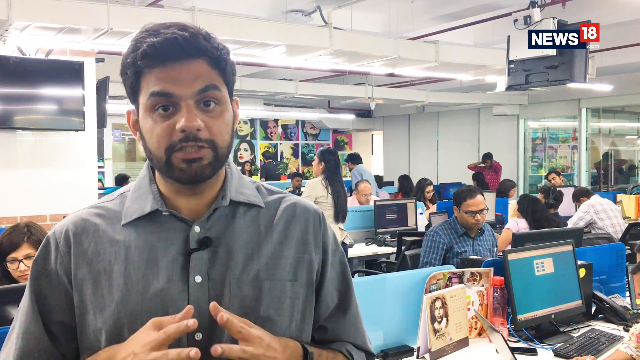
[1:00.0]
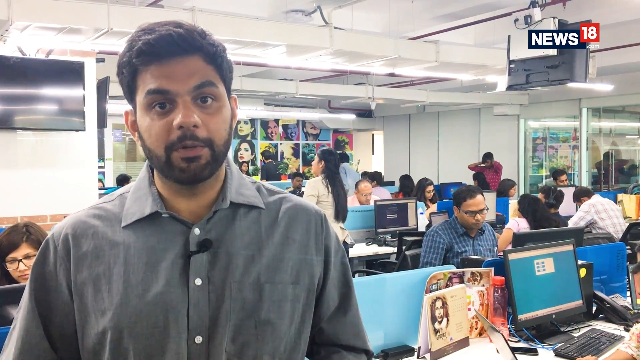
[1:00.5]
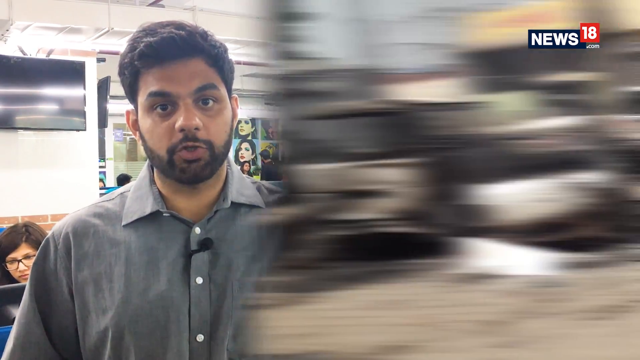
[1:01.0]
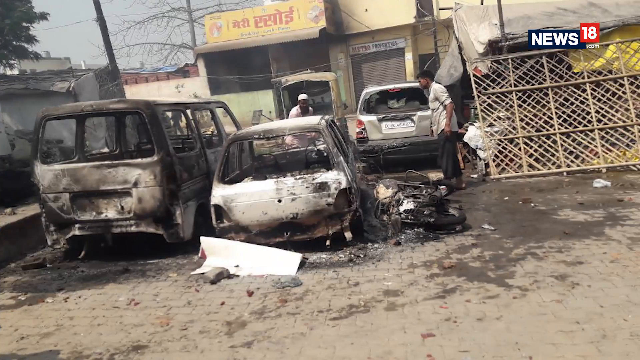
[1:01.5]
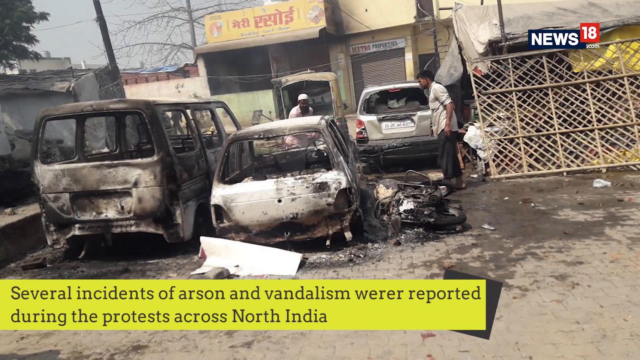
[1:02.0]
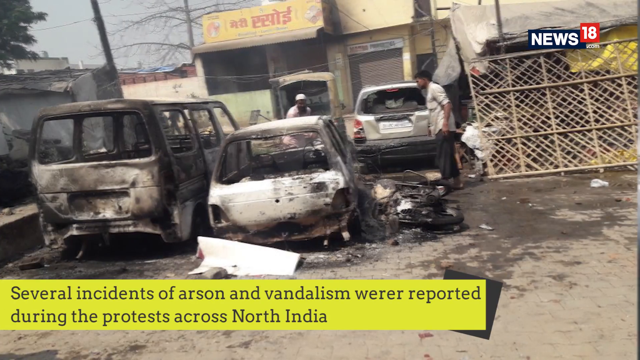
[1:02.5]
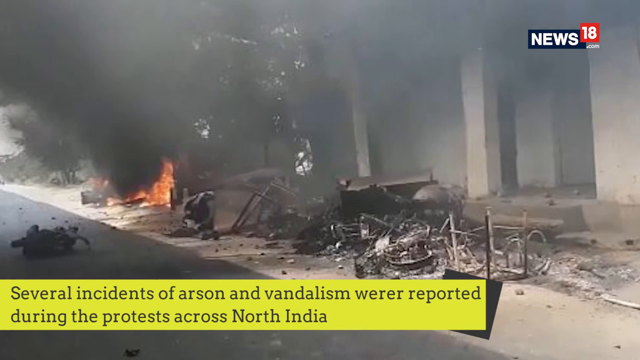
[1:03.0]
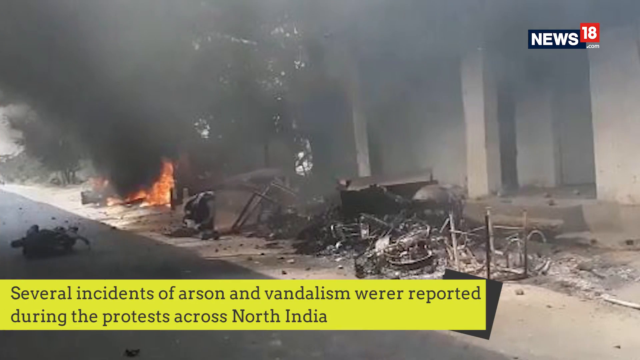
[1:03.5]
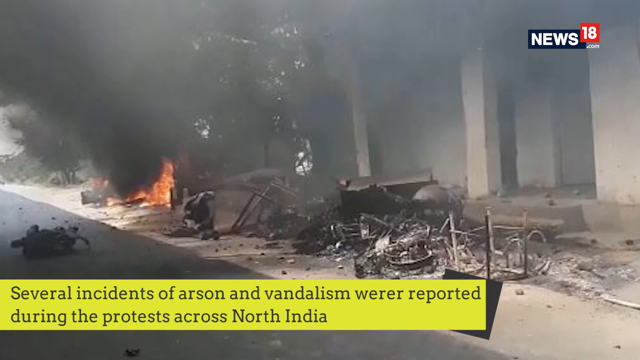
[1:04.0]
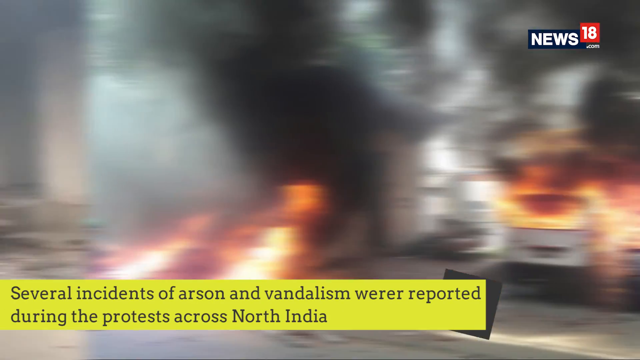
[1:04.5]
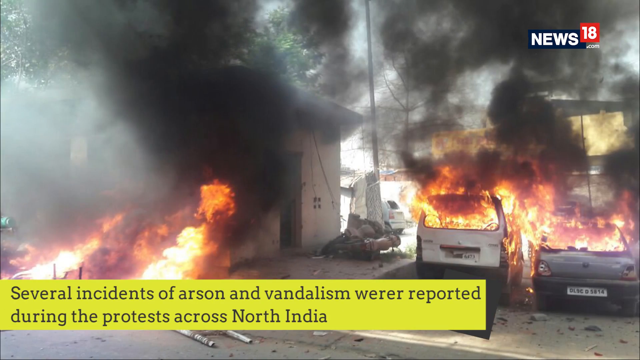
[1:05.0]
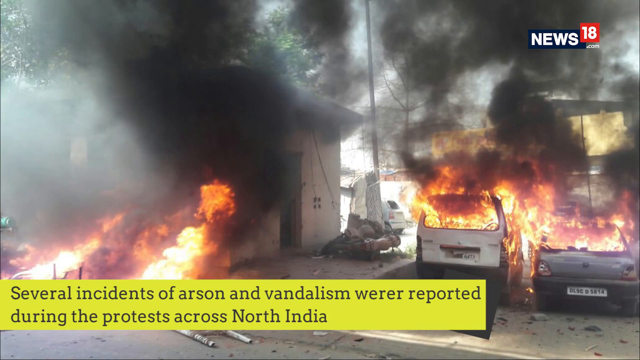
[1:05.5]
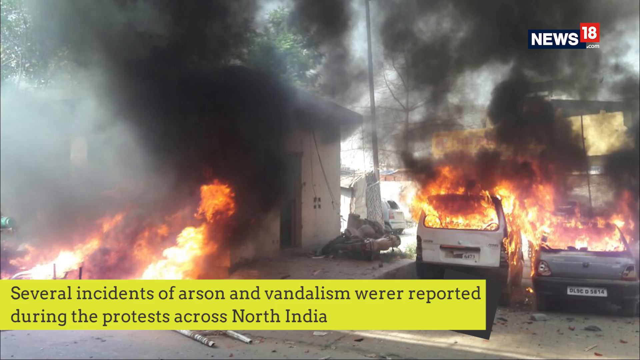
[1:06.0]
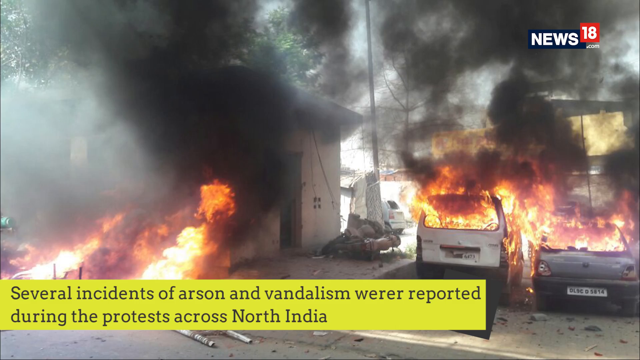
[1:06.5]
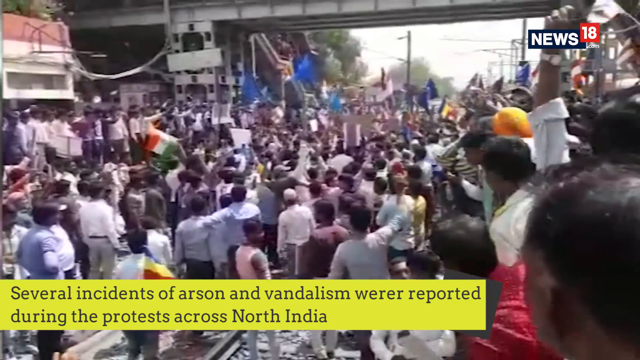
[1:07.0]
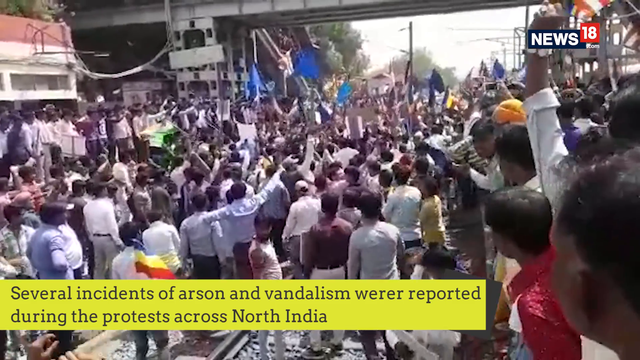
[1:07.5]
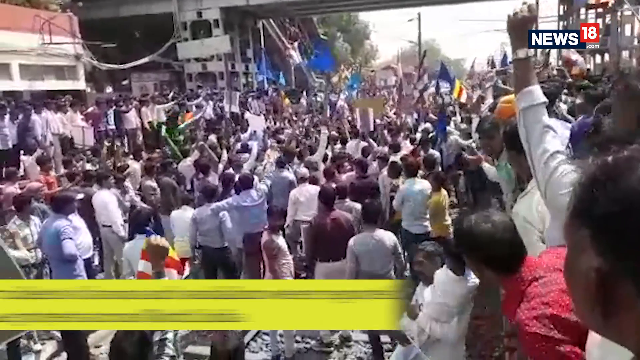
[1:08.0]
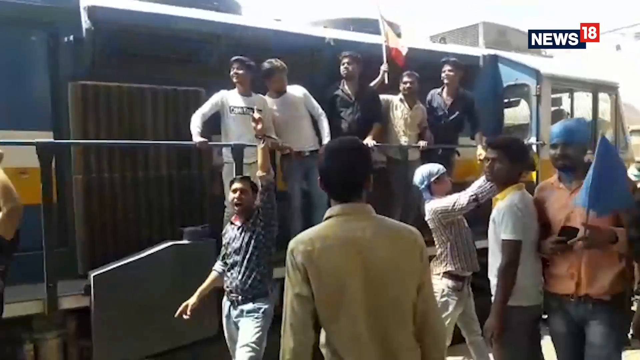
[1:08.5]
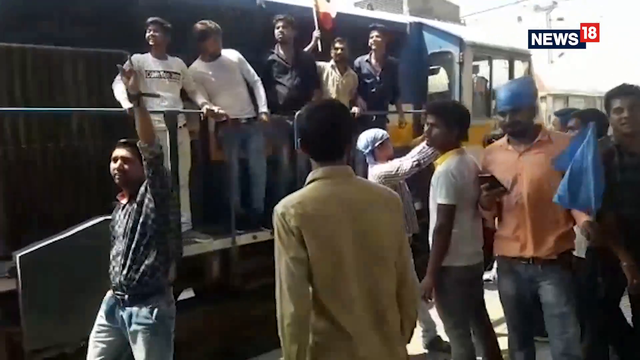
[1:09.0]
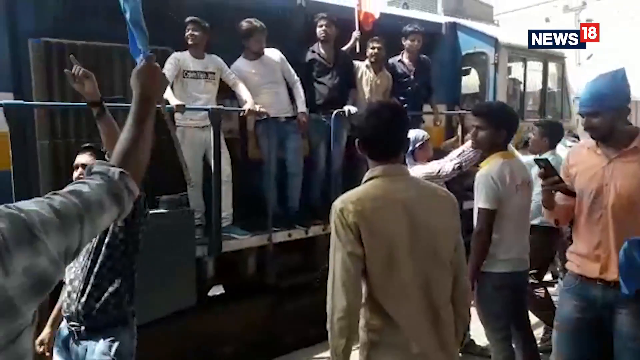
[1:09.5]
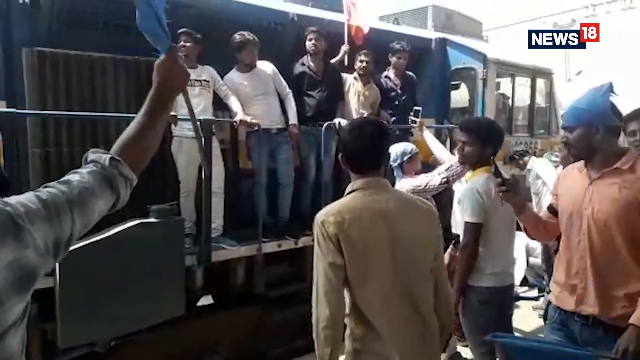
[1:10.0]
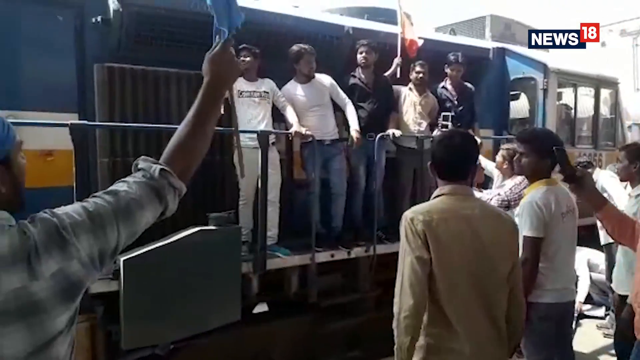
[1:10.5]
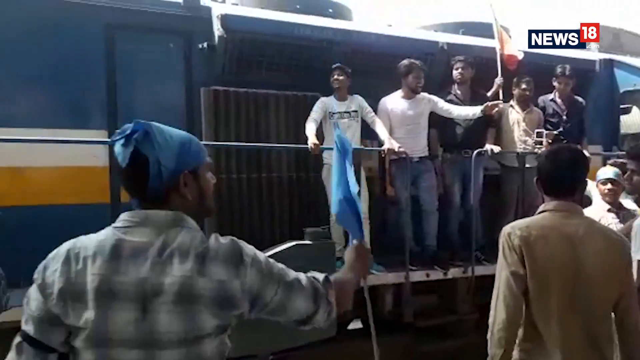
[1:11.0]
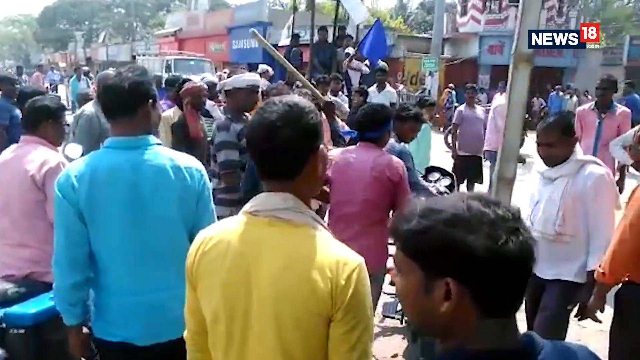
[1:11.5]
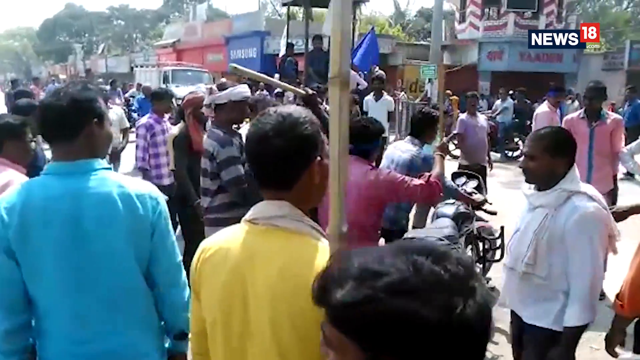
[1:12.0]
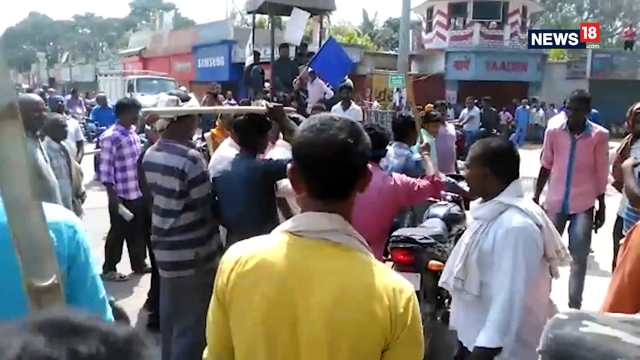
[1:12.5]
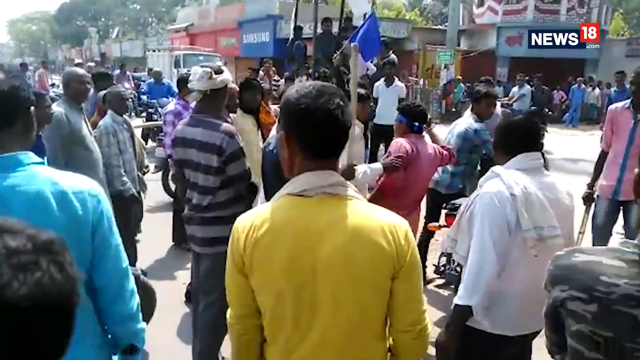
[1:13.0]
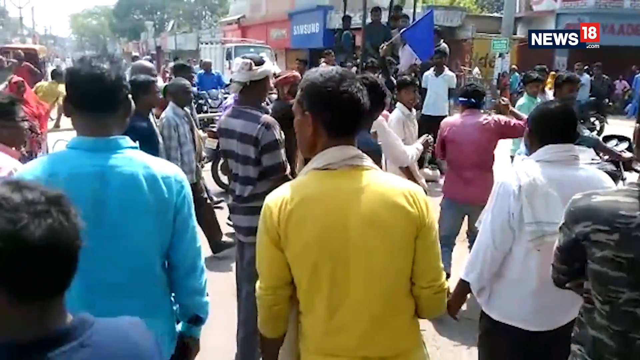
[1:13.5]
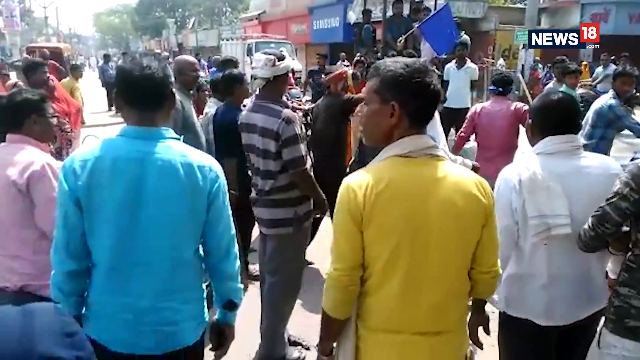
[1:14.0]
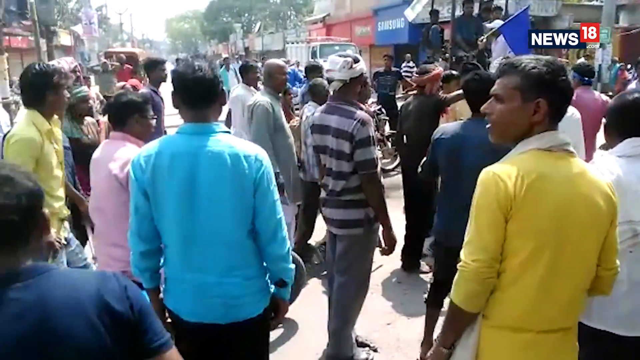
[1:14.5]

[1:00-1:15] The video, Bharat Bandh, Why Dalits Took to the Streets to Protest, is by News18. The newscaster appears in a newsroom, followed by a small fire and debris on the side of the road, with text reading "several incidents of arson and vandalism were reported during the protests across North India". Cars are on fire and crowds of people gather and protest in the street; some hold flags and they have sticks. The video returns to the newscaster talking in the newsroom, the same text repeats, and the devastation is shown once more: cars on fire, crowds in the street, people holding up flags and gathering together, and the damage that was caused.